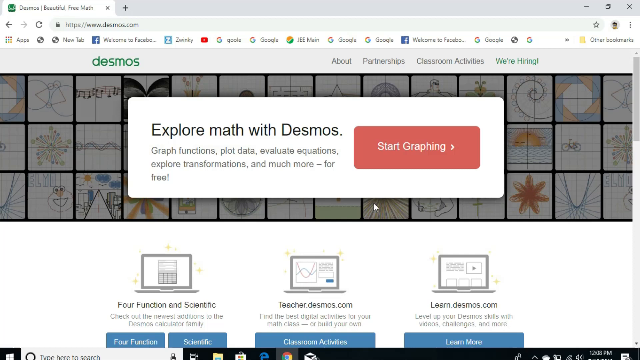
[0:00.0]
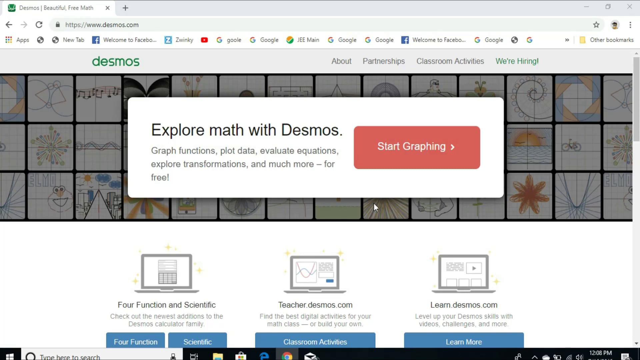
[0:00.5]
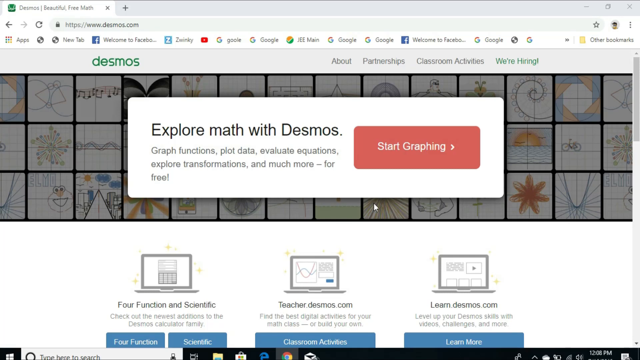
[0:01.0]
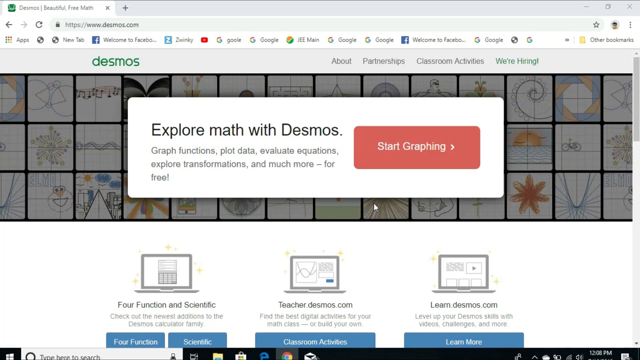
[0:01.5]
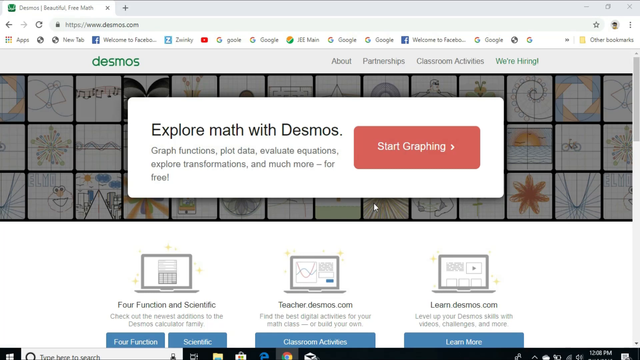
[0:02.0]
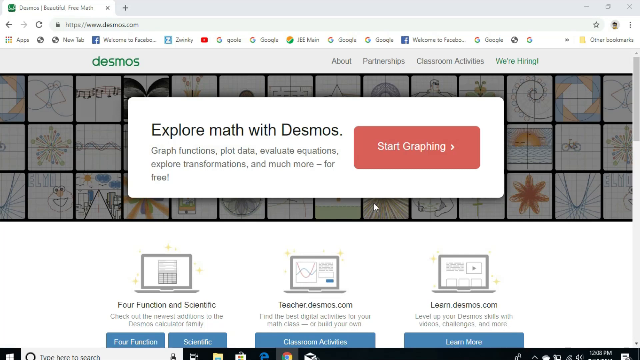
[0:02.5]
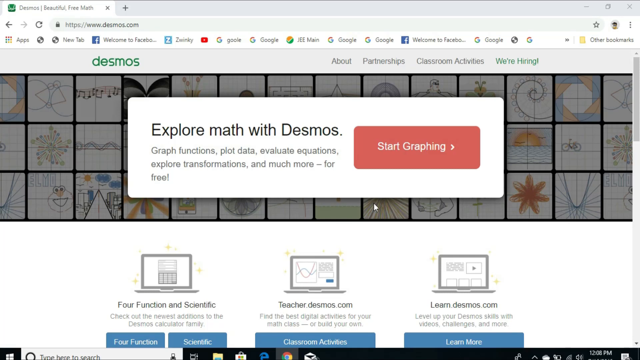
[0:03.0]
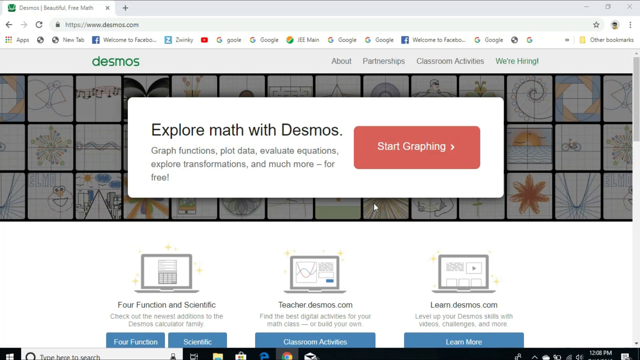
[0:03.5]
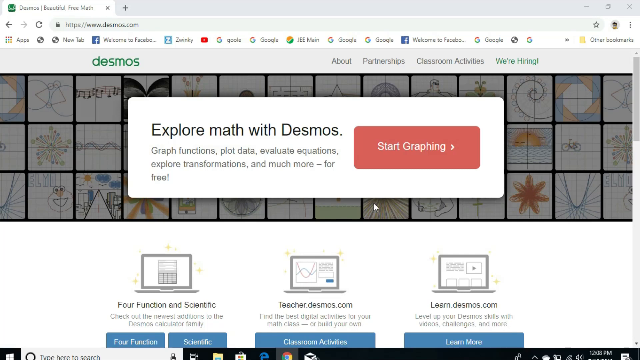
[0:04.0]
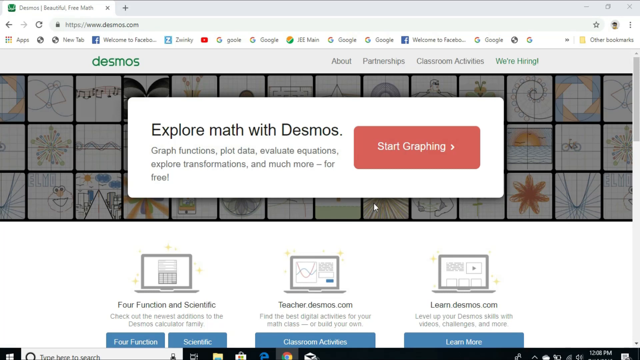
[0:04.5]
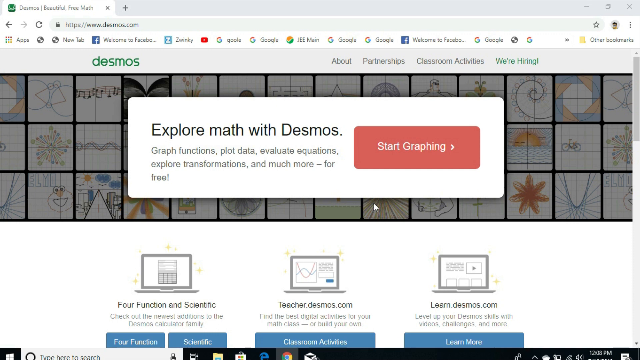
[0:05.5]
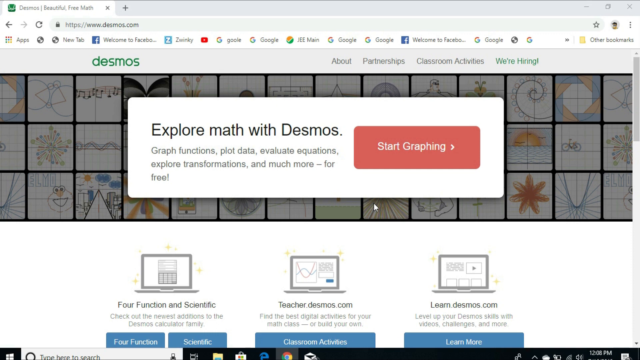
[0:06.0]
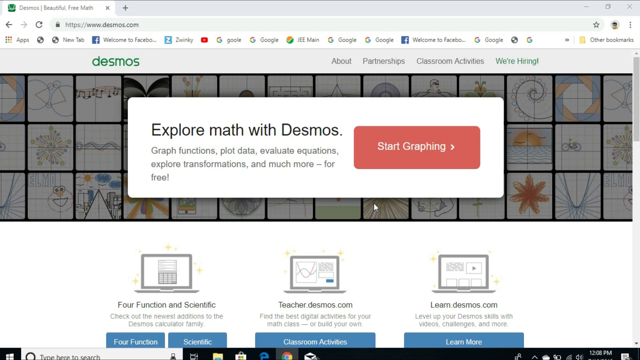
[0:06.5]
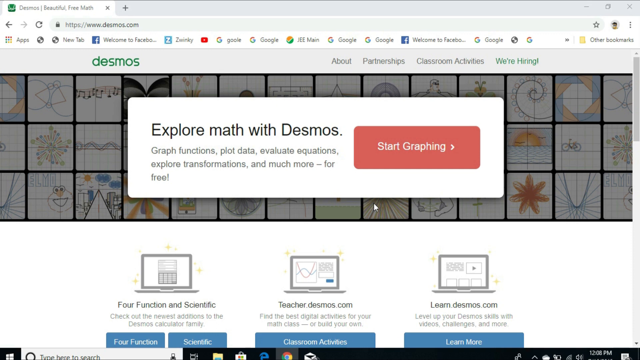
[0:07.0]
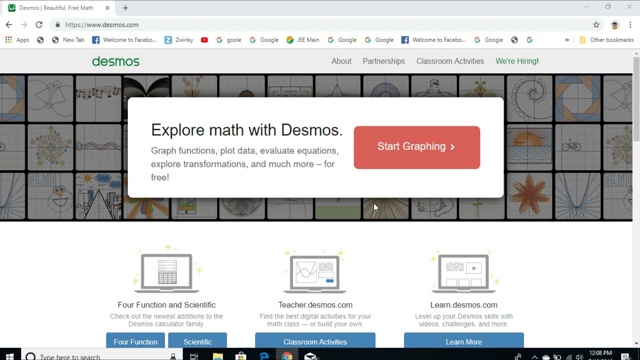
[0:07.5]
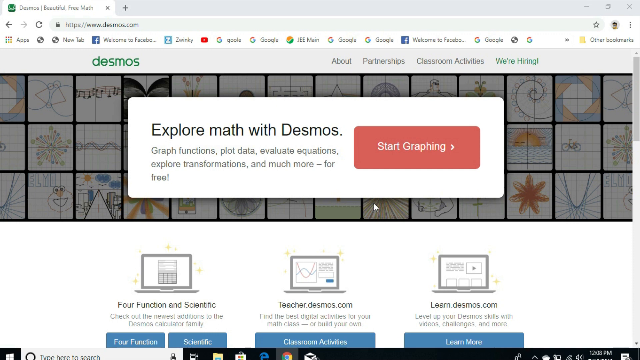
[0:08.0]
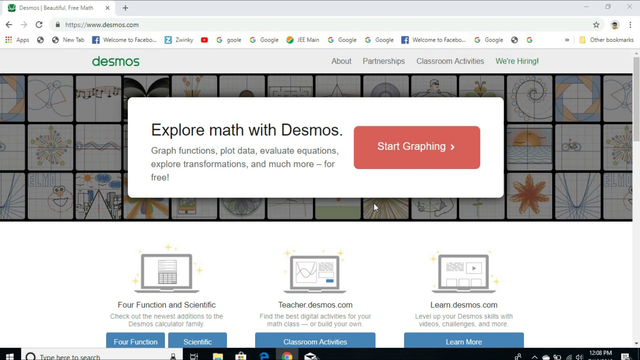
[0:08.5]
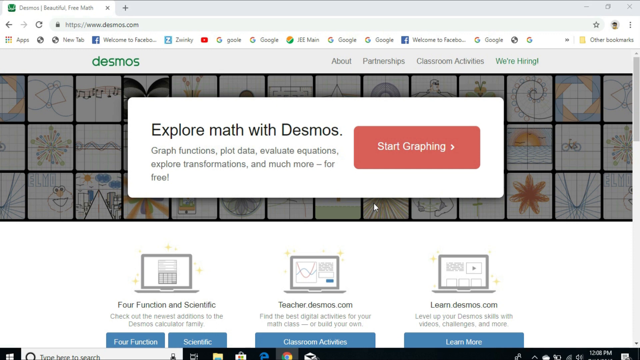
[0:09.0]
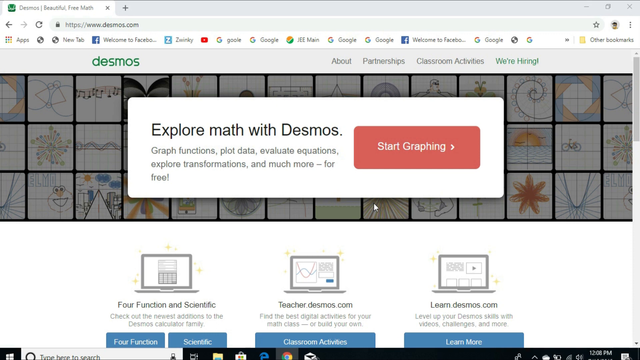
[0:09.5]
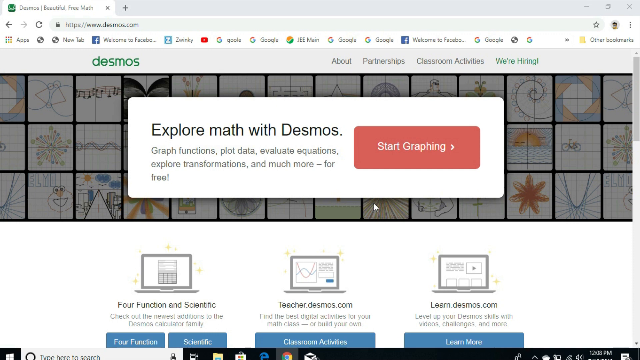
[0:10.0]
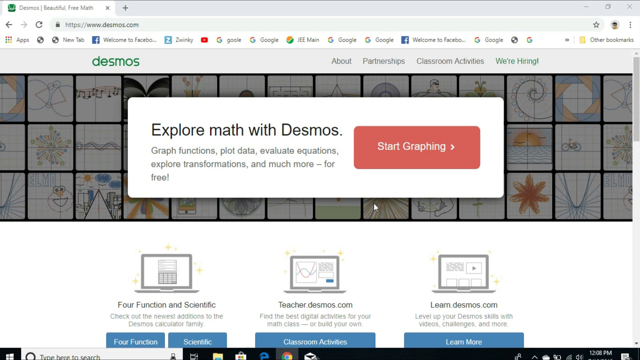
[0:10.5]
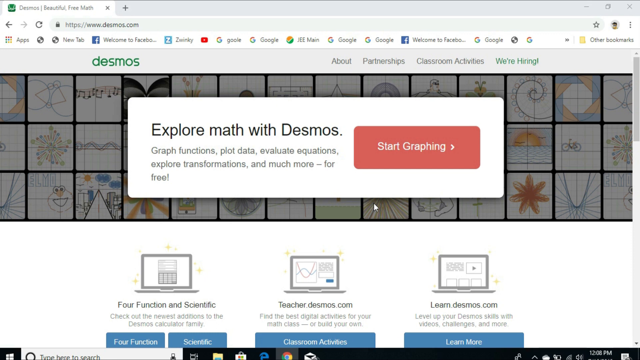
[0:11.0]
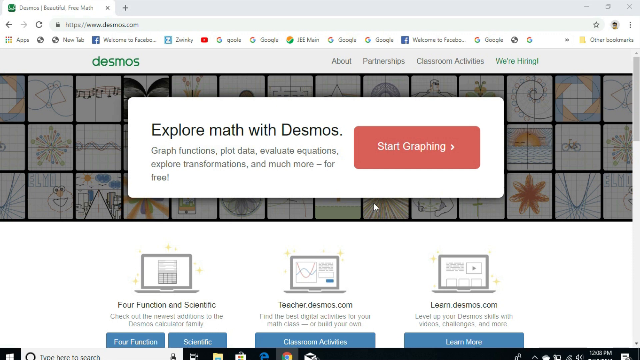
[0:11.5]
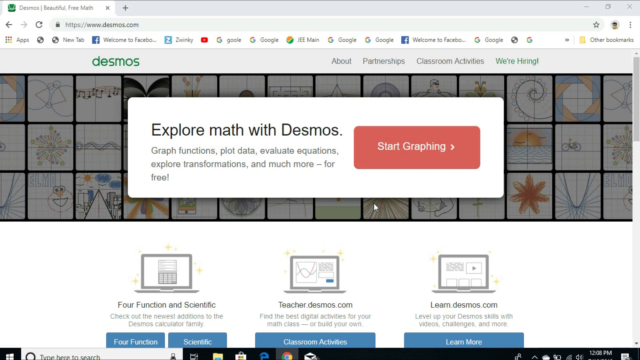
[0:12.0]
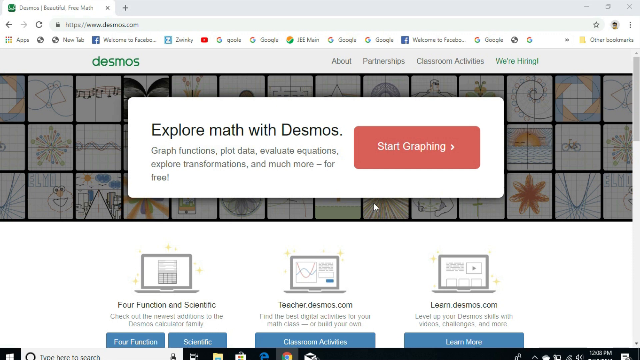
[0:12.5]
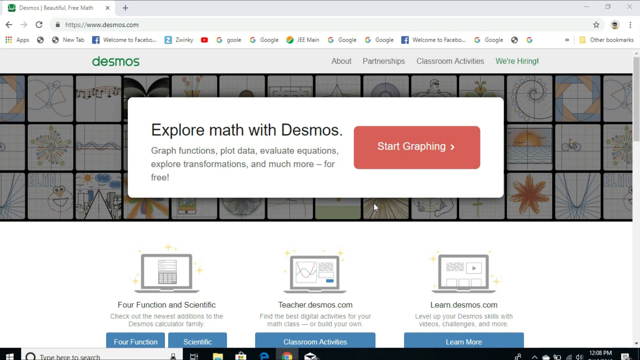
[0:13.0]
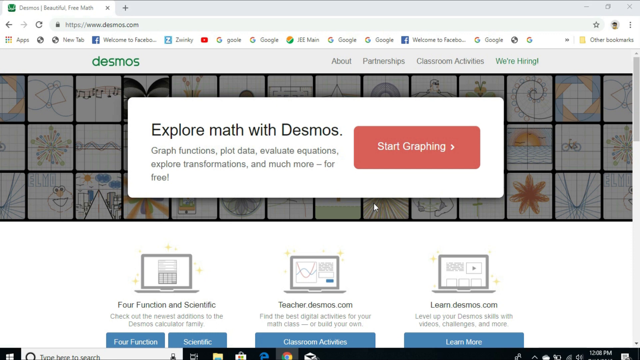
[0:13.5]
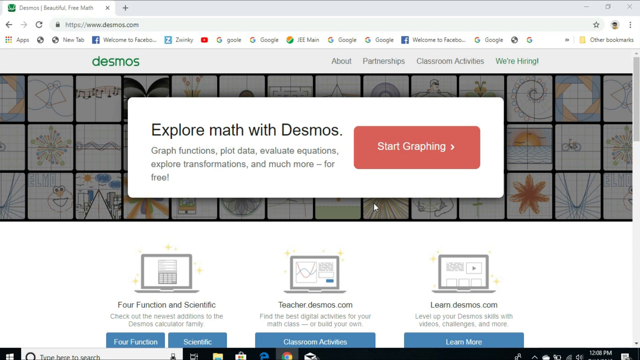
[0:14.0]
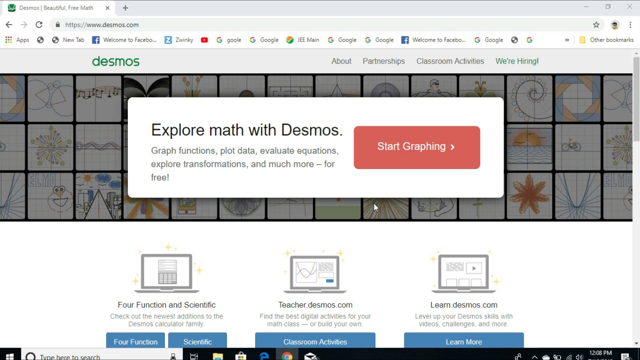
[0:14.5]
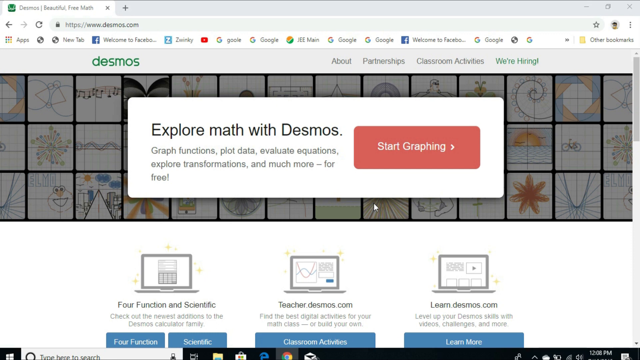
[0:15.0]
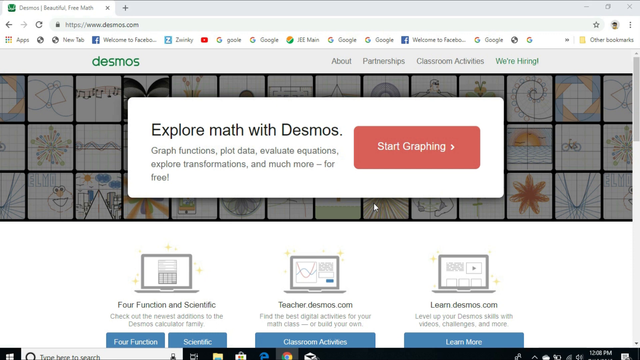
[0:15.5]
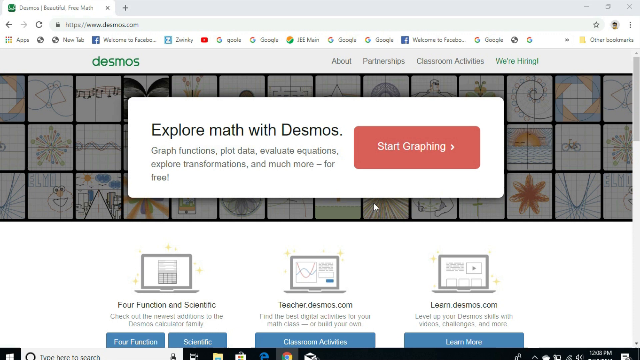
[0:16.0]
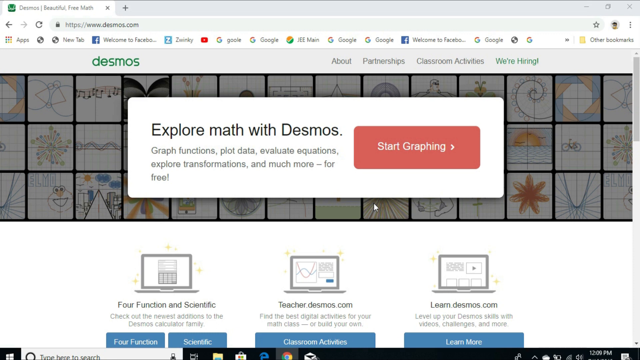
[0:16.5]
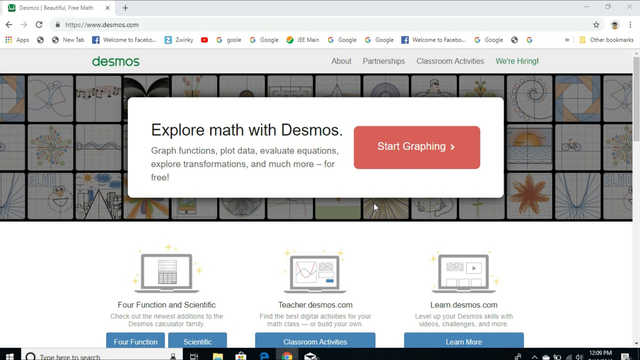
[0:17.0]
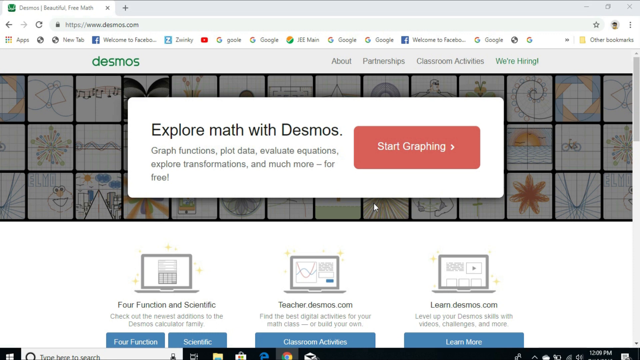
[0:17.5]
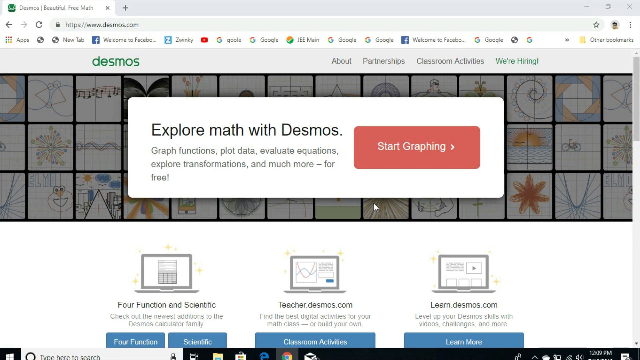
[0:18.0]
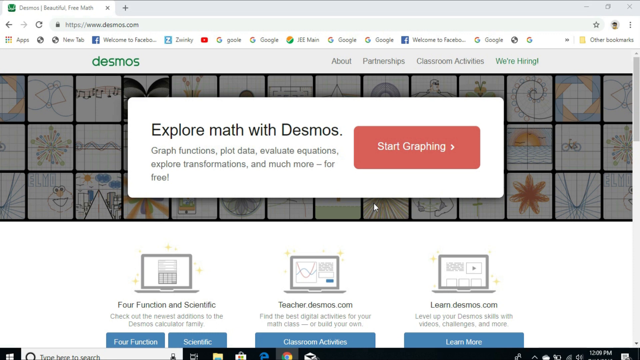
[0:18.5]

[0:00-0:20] This is a screen recording of Desmos.com, opening on the home page. A big button reads "start graphing", and next to it in the middle is the text "explore math with Desmos". Below are four functions listed as scientific, teachyou.desmos.com and learn.desmos.com, with buttons beneath them leading to each one. The navigation bar at the top right shows an about page, partnerships, classroom activities and "we're hiring". In the middle banner under "explore math with Desmos", text reads "graph functions, plot data, evaluate equations, explore transformations and much more for free". The banner's background shows many different graphs drawn with different equations in this tool, arranged in three rows across the pattern. Nothing changes in this shot; the page stays the same for its duration.